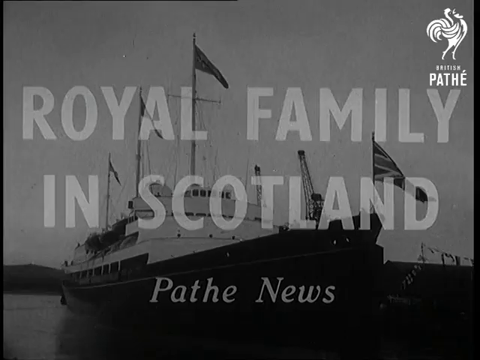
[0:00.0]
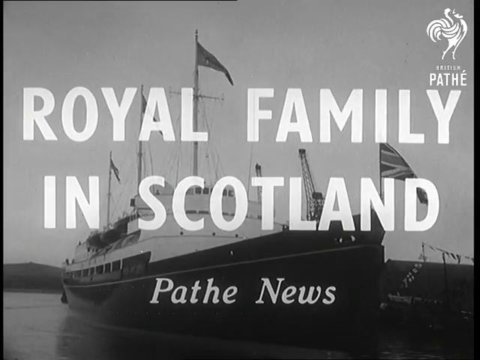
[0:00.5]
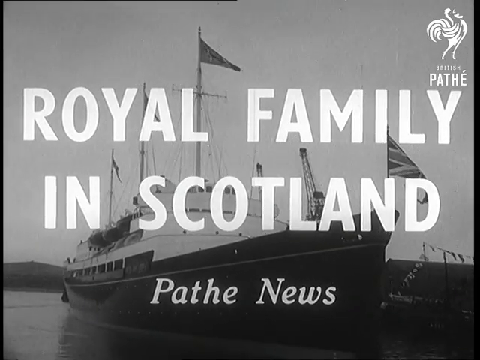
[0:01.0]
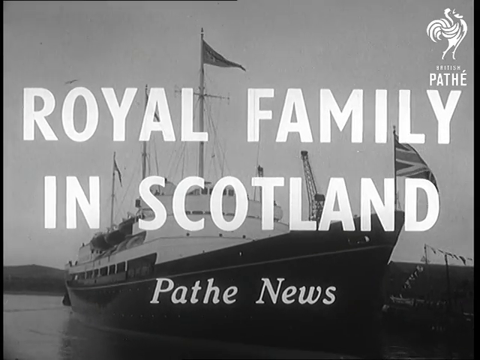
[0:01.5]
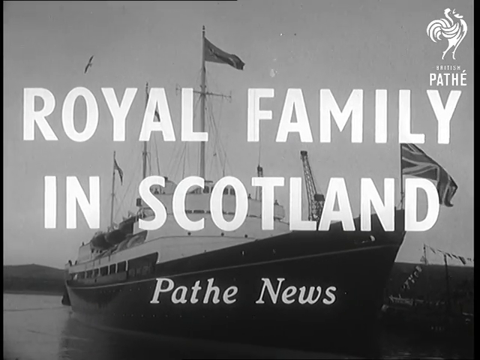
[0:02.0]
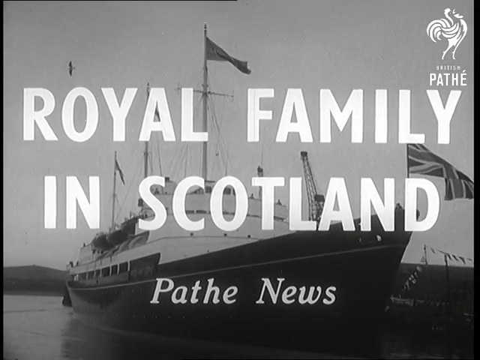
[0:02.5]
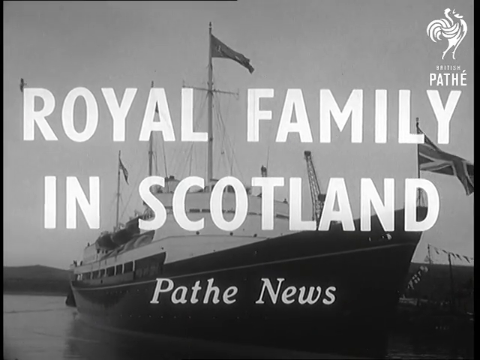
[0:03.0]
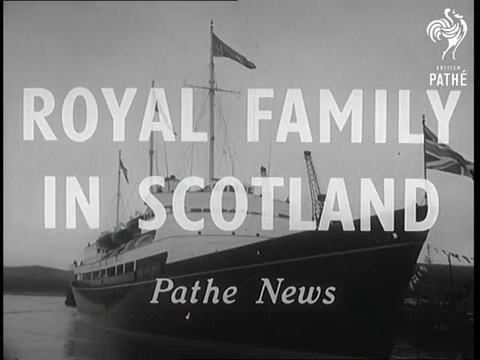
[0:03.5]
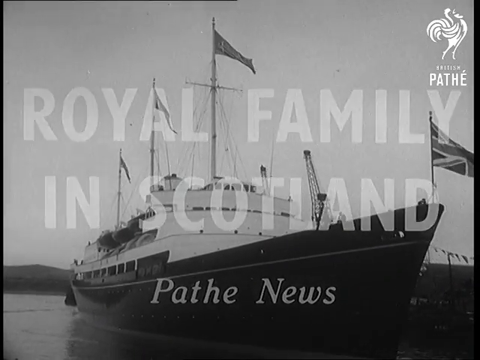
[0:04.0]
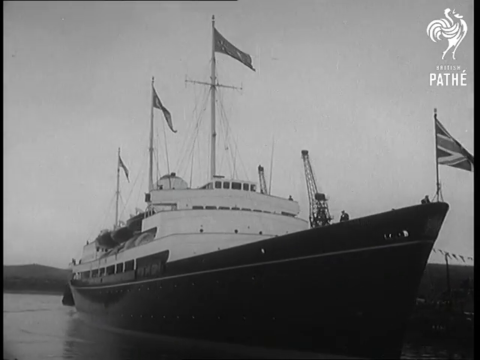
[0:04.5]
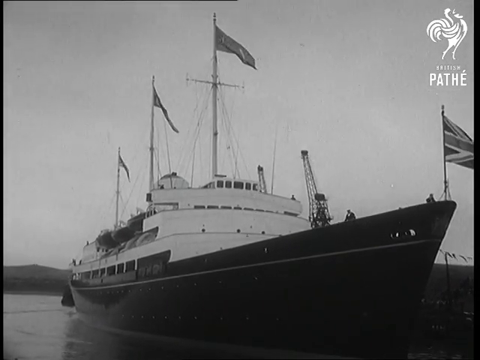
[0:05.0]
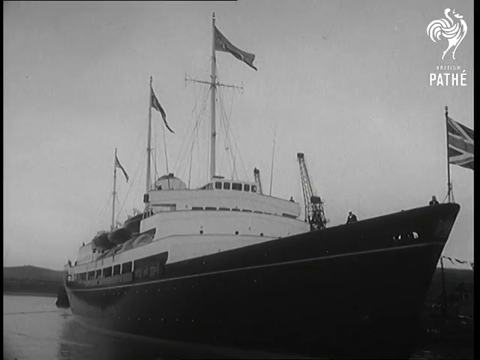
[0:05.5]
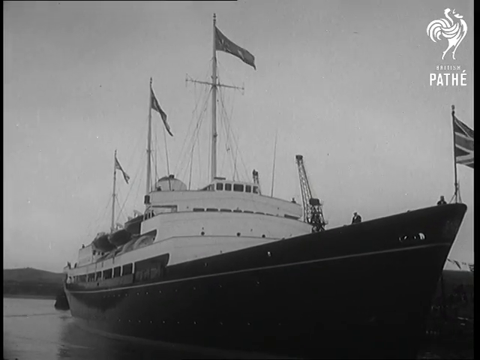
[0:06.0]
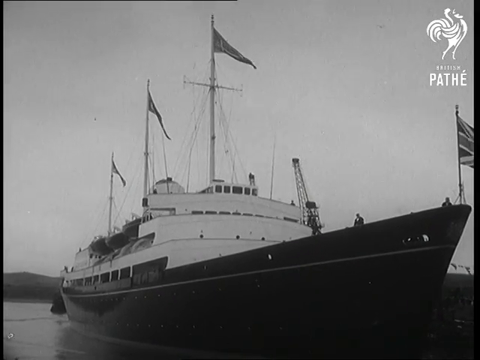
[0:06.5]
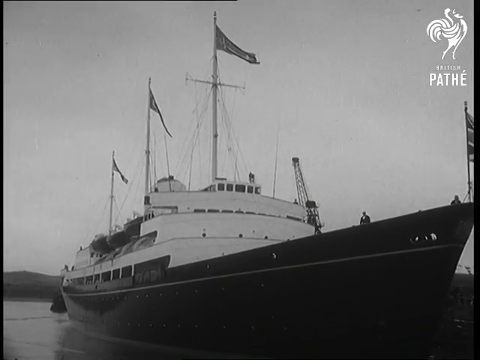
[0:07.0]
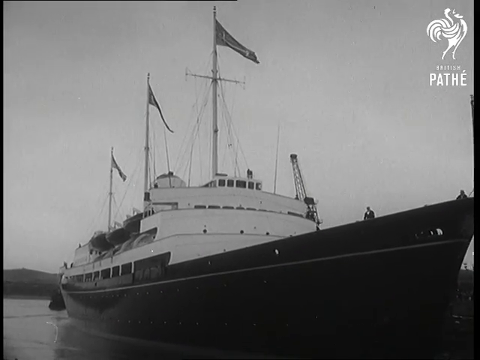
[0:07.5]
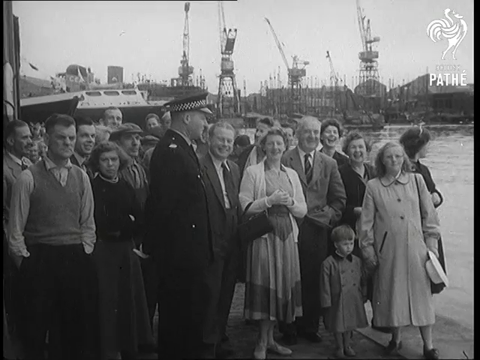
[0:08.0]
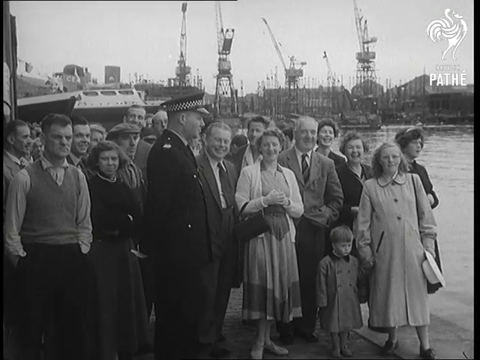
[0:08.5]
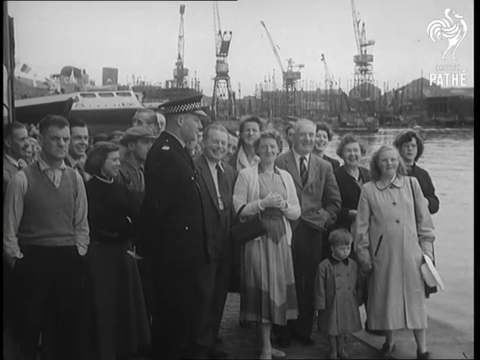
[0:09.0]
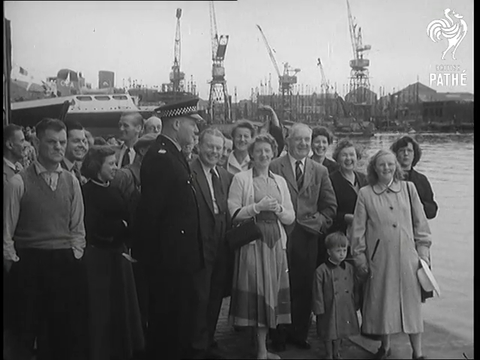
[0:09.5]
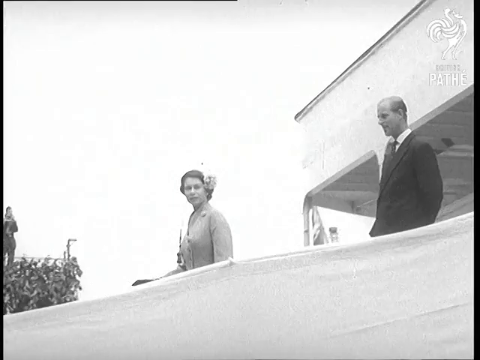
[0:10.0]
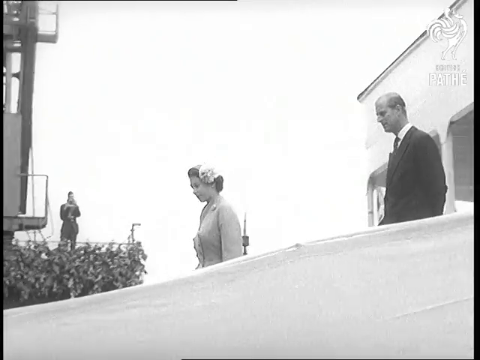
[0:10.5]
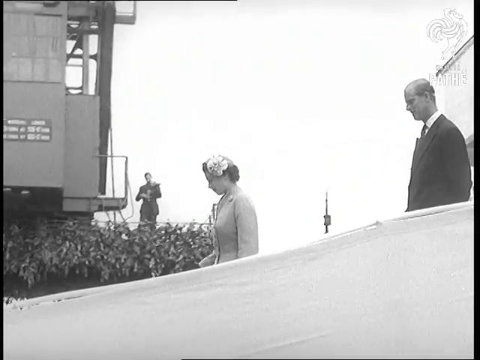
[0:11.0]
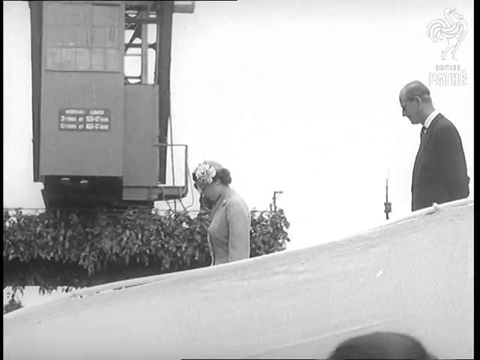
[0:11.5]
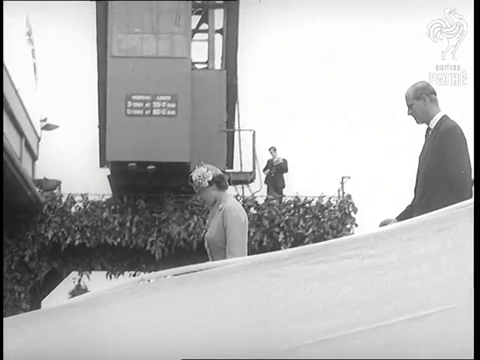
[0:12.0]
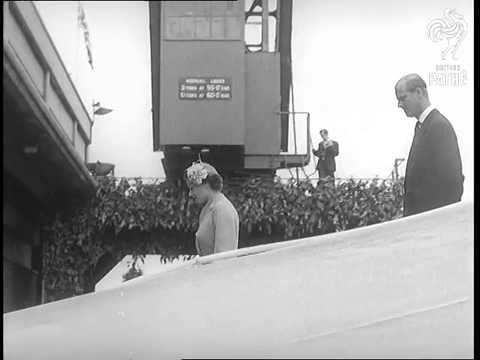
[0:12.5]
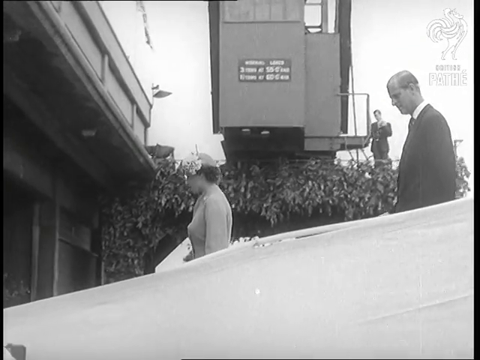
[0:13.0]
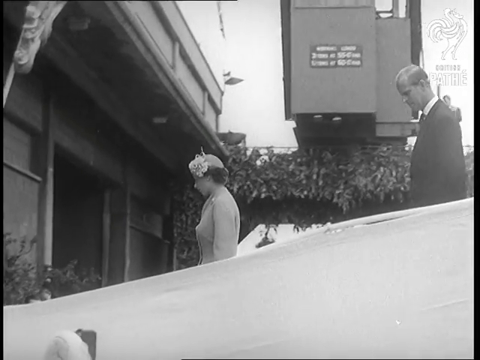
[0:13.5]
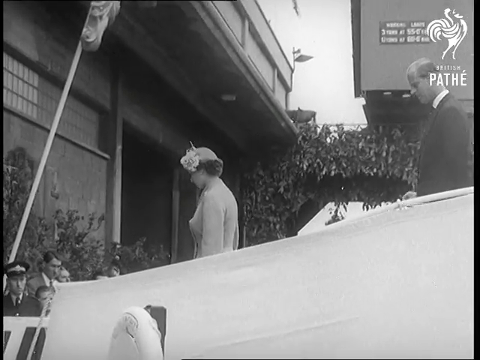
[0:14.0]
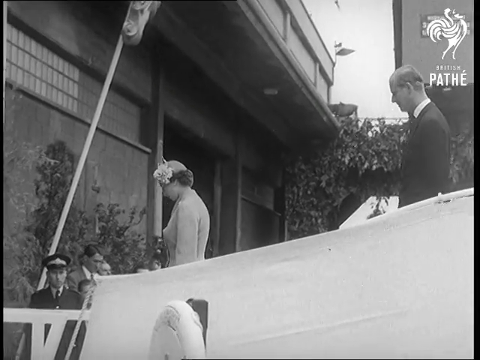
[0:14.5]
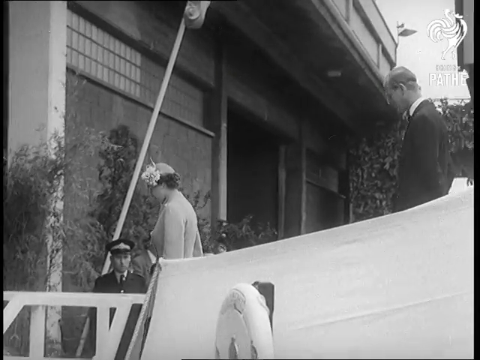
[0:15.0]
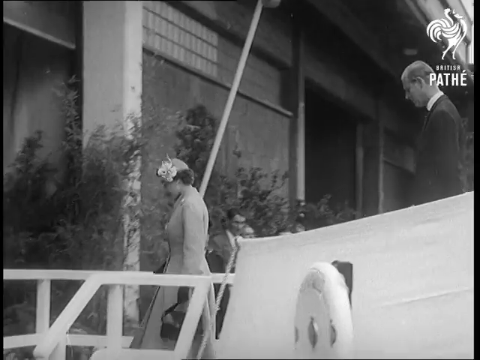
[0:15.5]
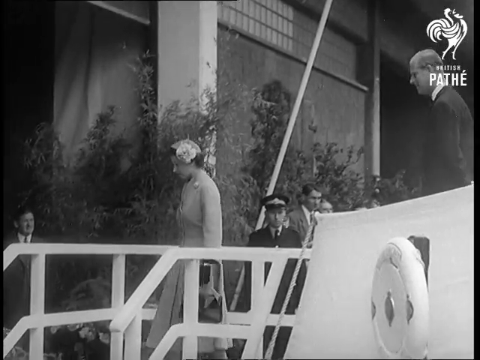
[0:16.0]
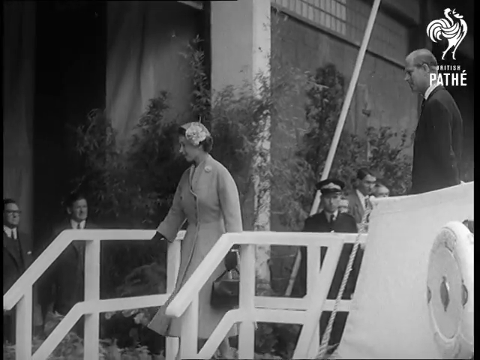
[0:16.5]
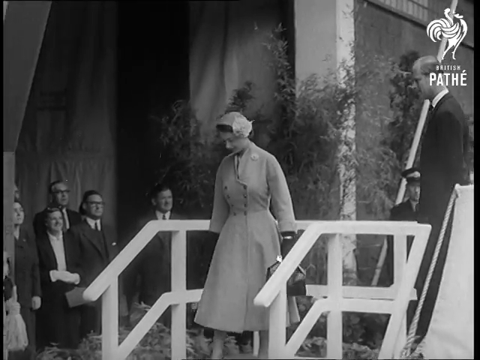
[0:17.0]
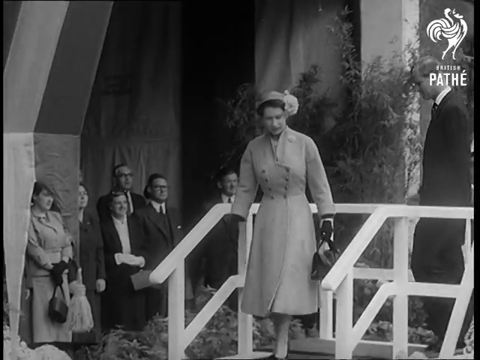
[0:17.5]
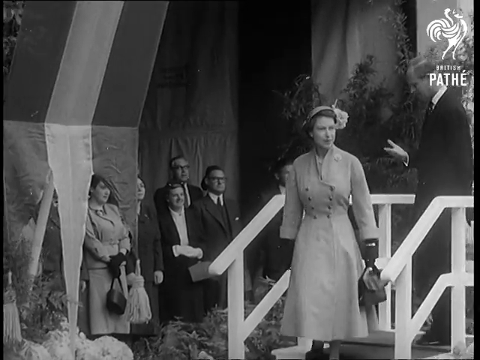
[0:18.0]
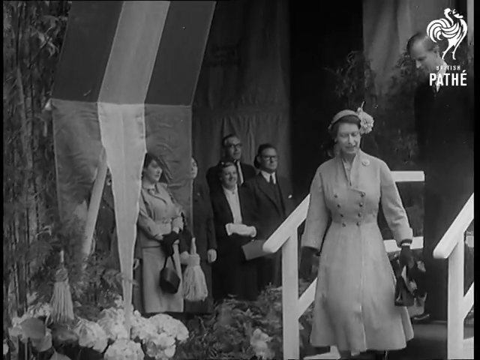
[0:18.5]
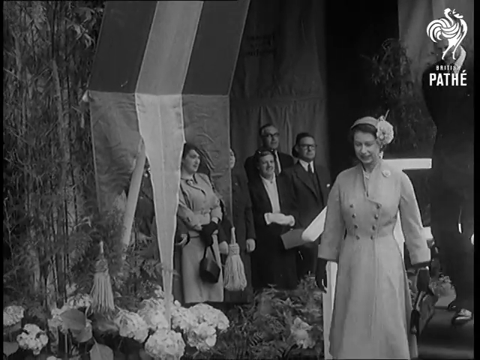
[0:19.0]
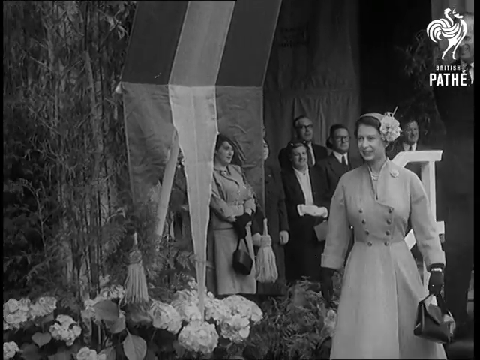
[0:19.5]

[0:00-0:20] A black-and-white Pathe newsreel opens on the subject of the Royal Family in Scotland. The Royal Yacht Britannia comes in to dock, flying the Union flag. Cranes are in the background, and a crowd has assembled to welcome the Royal Family, a real mix of ages from small boys to pensioners, with a policeman maintaining order. Queen Elizabeth II and Prince Philip, the Duke of Edinburgh, descend the gangplank from the ship down to the dockside. The Queen wears a long coat and a hat with a large flower on it, and carries a dark handbag. They then descend steps to reach ground level. Prince Philip is in a business suit and tie. The scene looks very 1950s: the people watching the royal family are quite formally dressed and watch without celebrating too expressively.